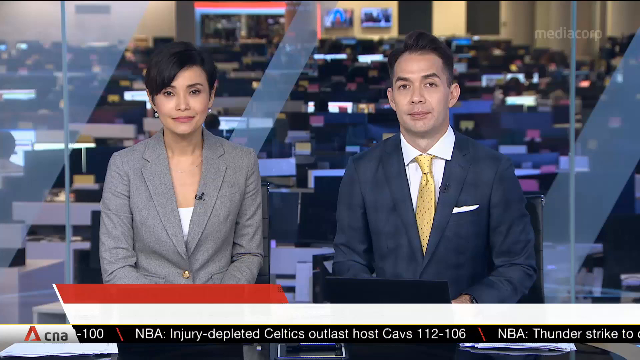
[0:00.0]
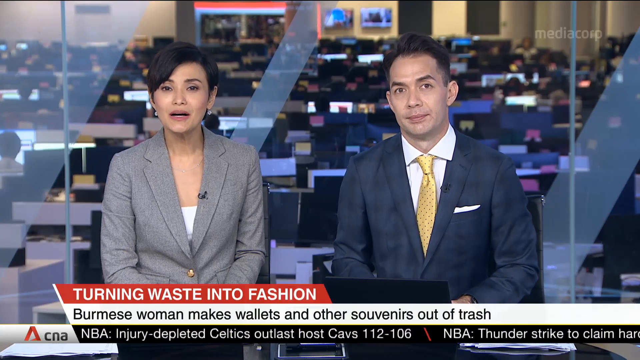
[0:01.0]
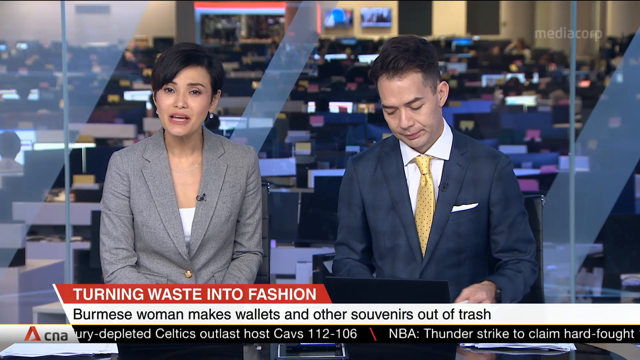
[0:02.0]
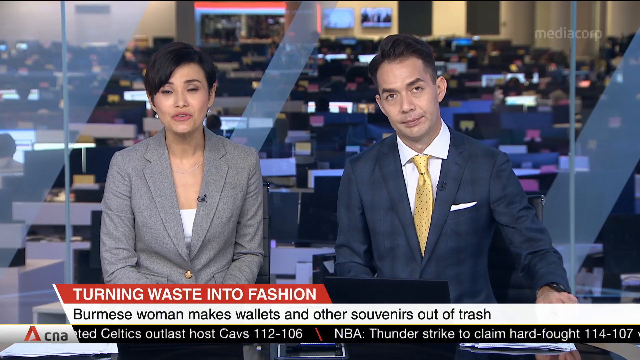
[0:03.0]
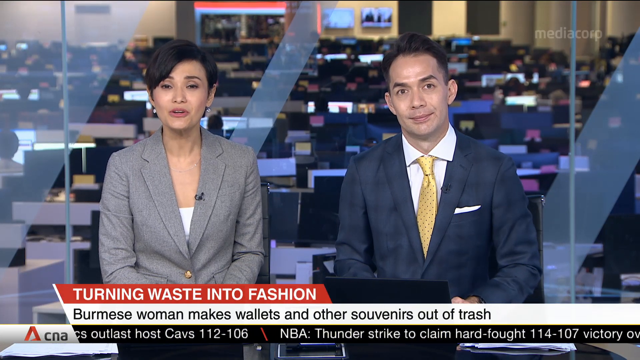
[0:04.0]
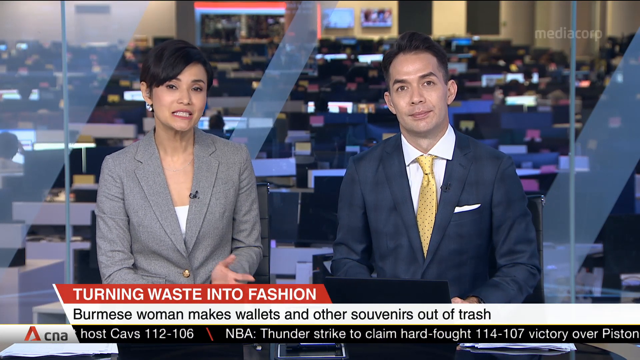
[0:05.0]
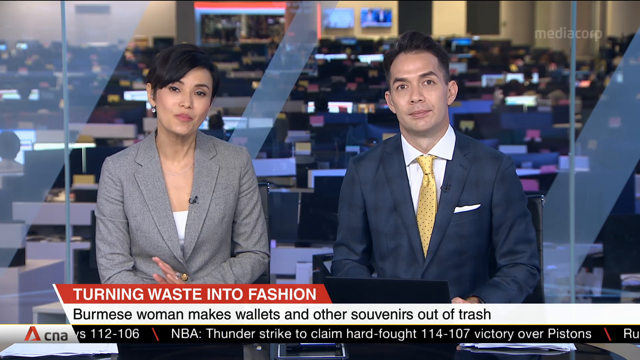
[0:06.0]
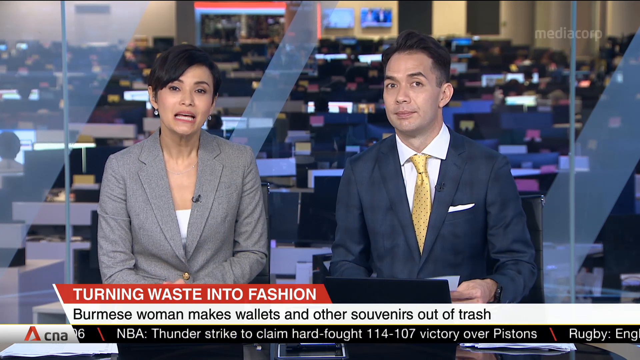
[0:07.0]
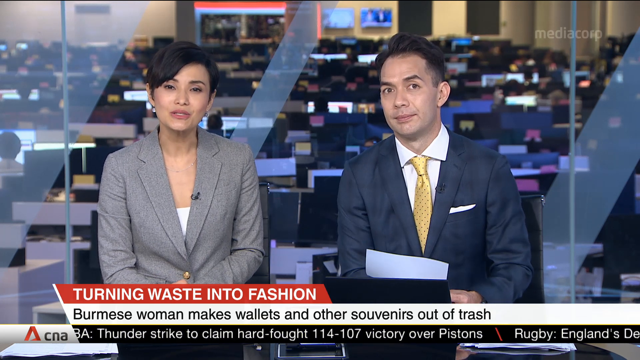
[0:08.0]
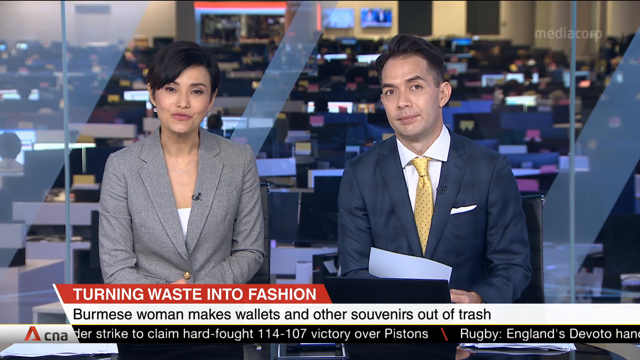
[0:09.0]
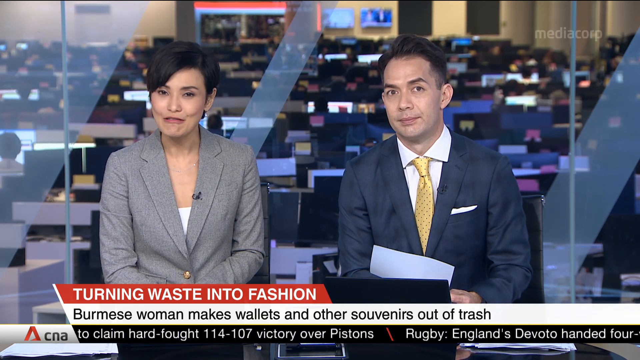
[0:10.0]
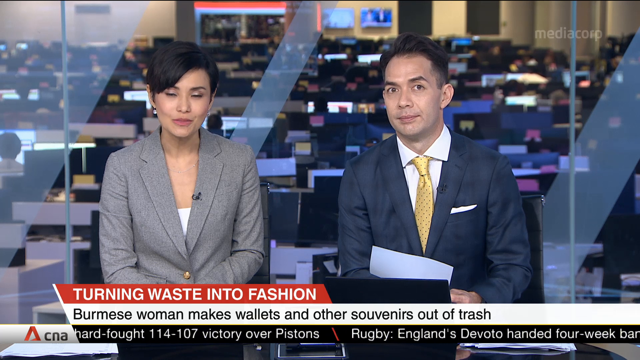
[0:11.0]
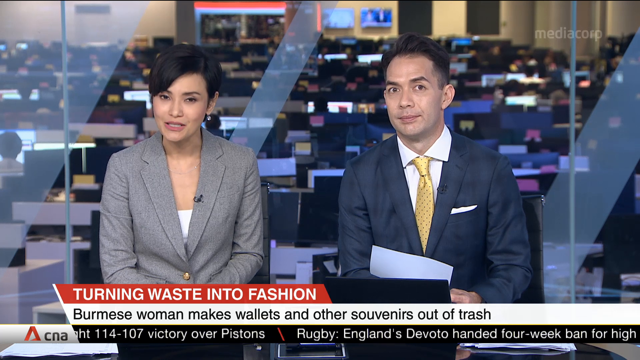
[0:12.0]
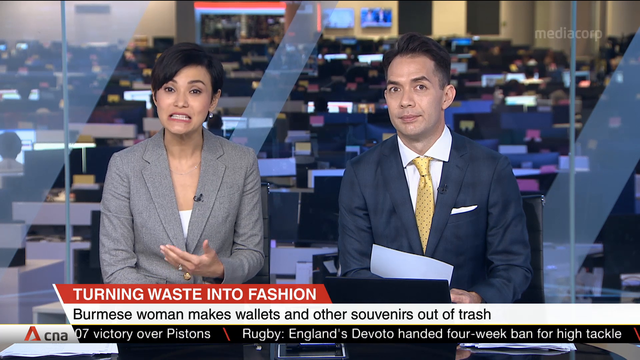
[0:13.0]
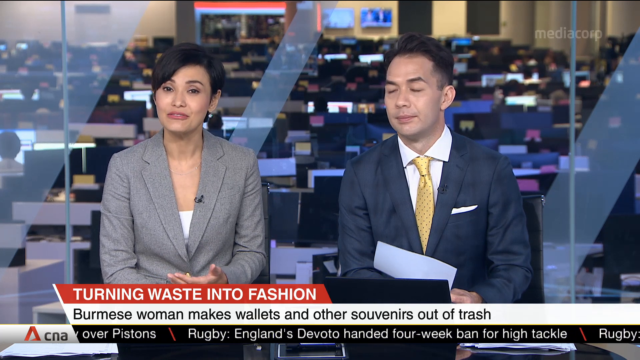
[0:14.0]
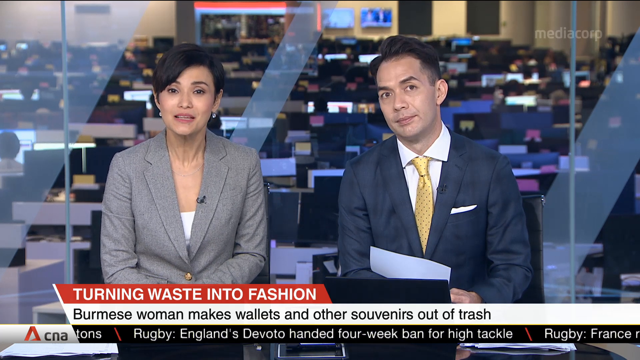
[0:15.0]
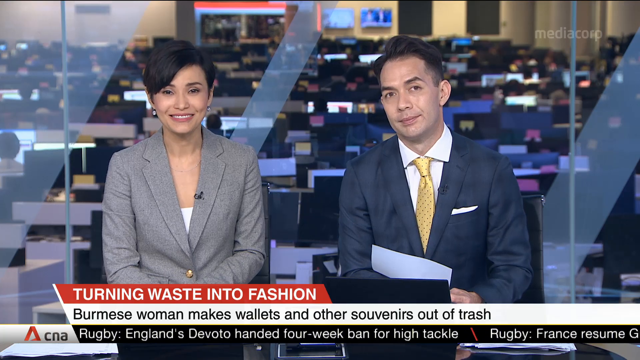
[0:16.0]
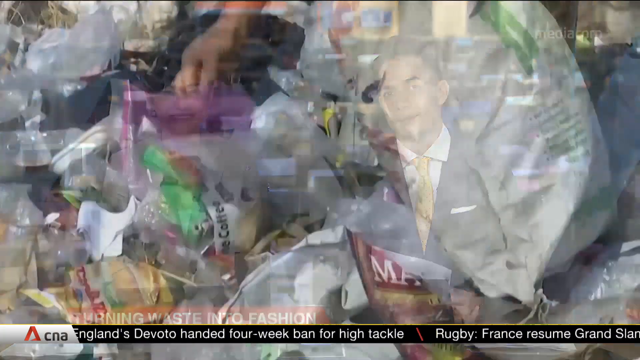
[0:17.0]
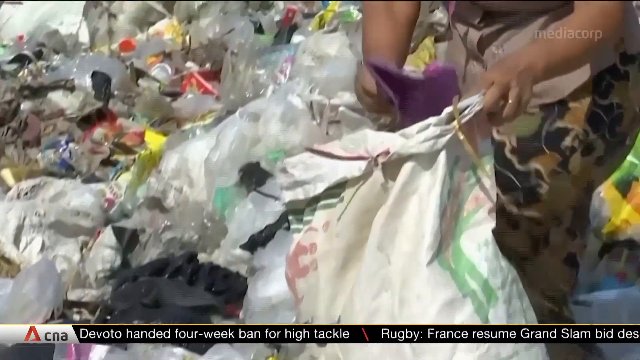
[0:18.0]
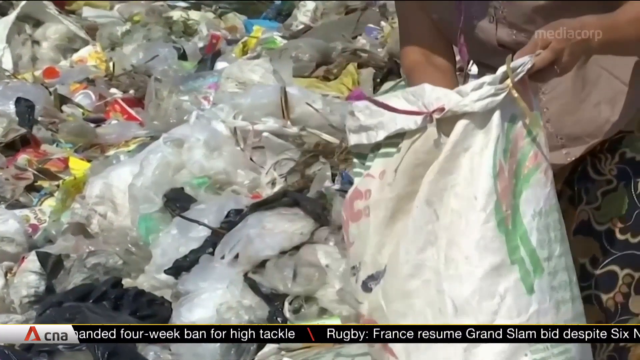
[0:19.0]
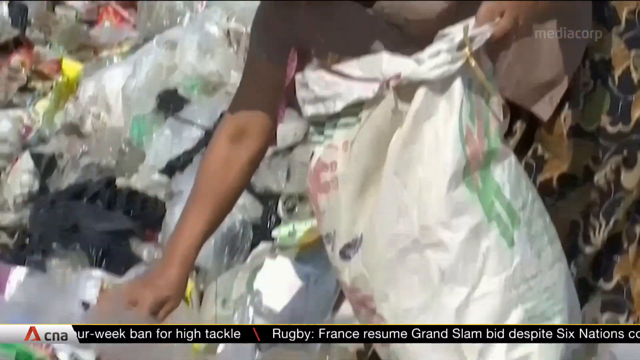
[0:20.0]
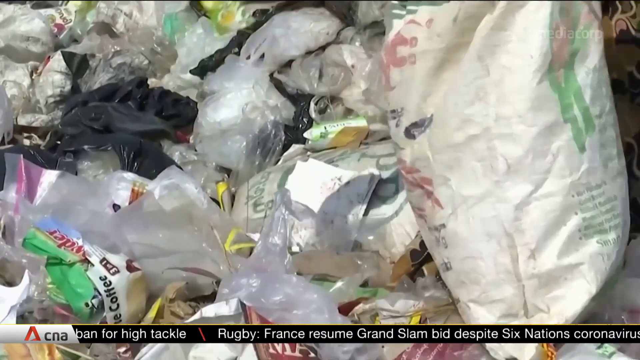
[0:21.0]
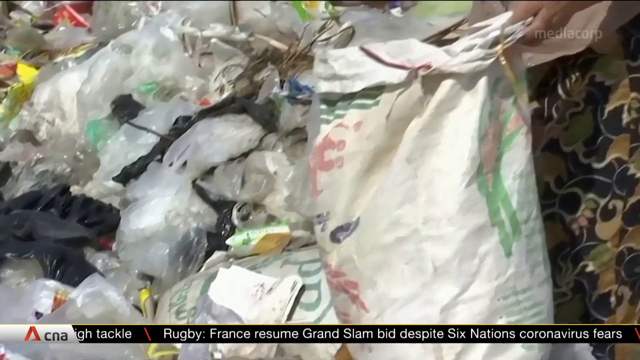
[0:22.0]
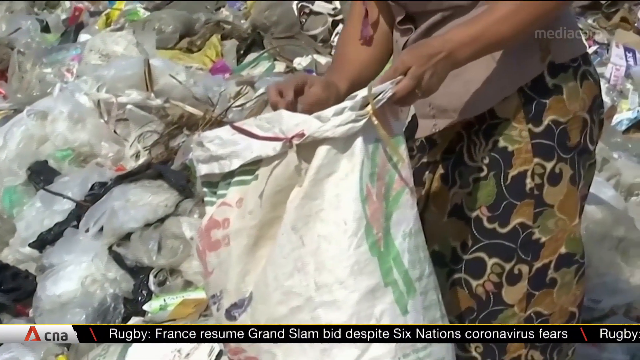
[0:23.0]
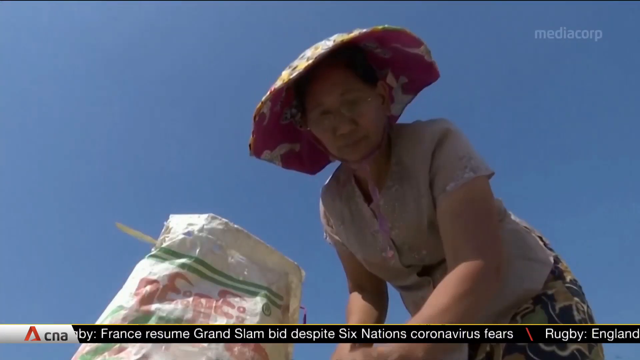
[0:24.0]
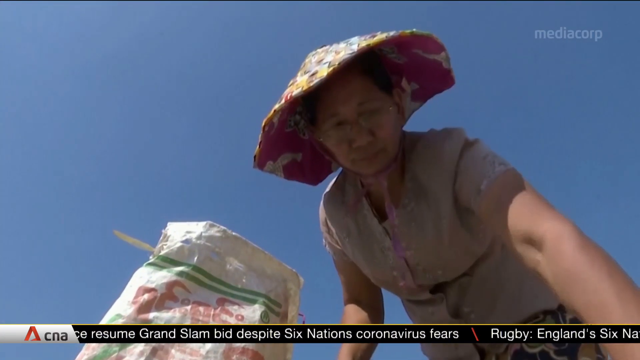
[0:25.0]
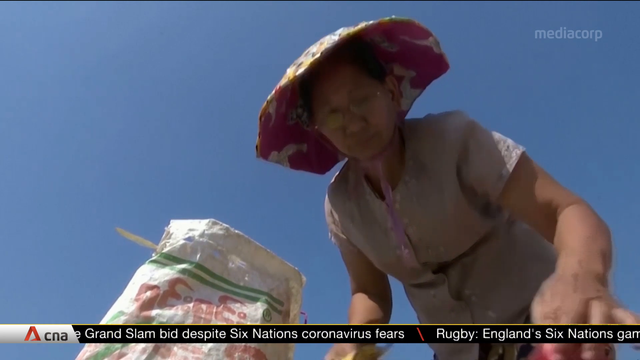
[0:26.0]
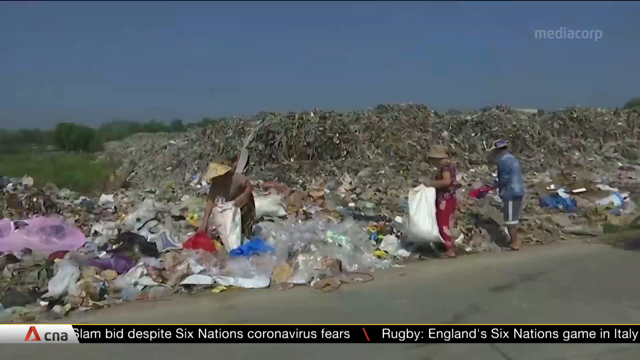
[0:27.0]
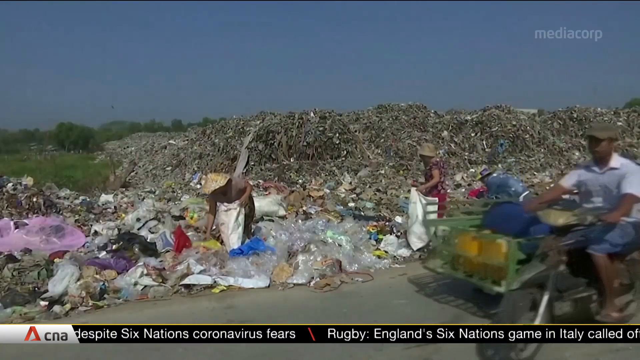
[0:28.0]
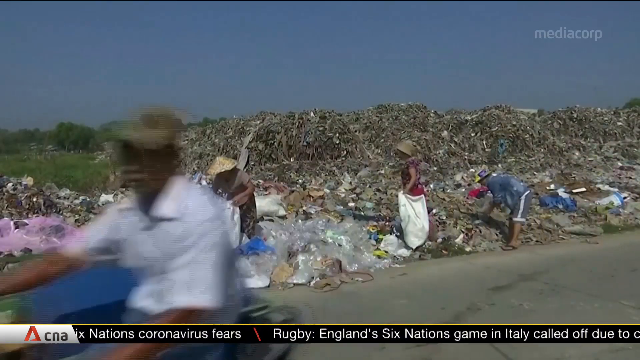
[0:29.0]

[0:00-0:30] Two women and a man, all adults, appear; they are apparently around 39 or 40 years old. The man wears a navy suit, a white shirt and a yellow tie with small black dots, and has short hair. The woman wears a gray coat and a white top and has medium-length hair. They are presenting the news in a studio, and the background seems to contain a lot of computers. An open laptop is in front of the man. As they talk, the man shakes his head, and he has a paper in his hand. The scene then changes to a rubbish waste site, where a lady, described as Indian or Chinese, is busy with other women and one man putting waste into bags.